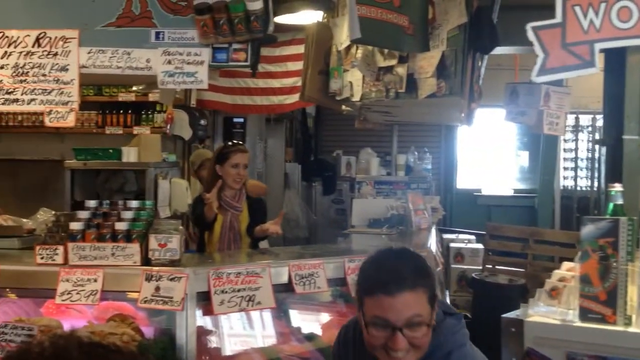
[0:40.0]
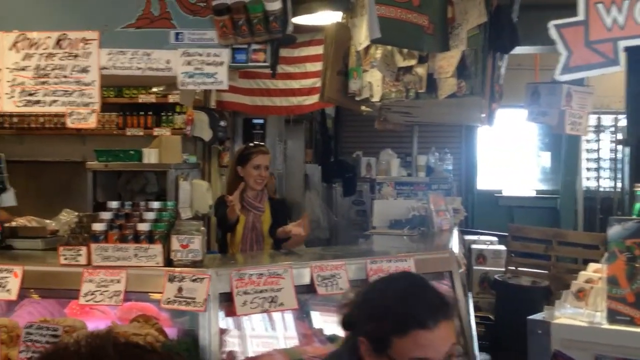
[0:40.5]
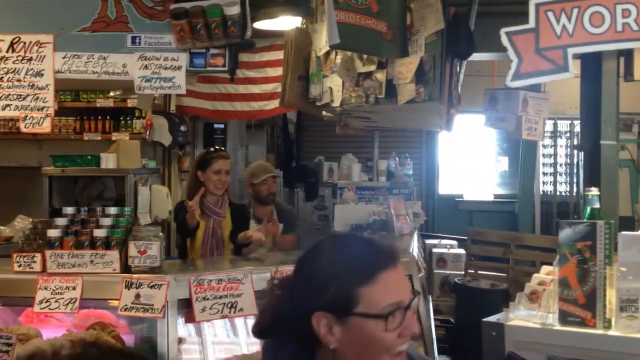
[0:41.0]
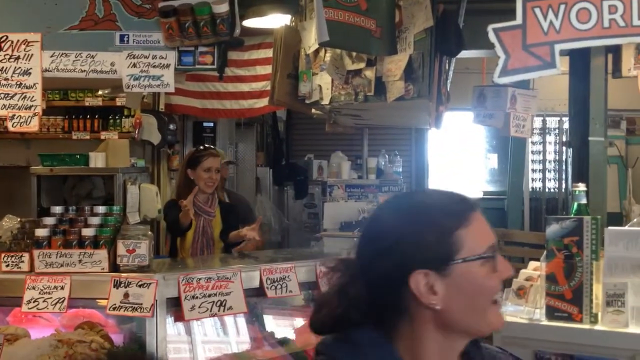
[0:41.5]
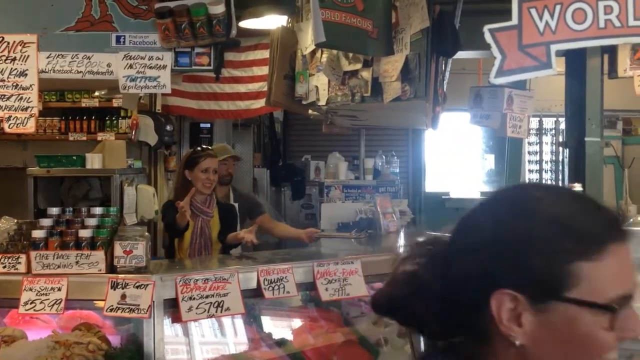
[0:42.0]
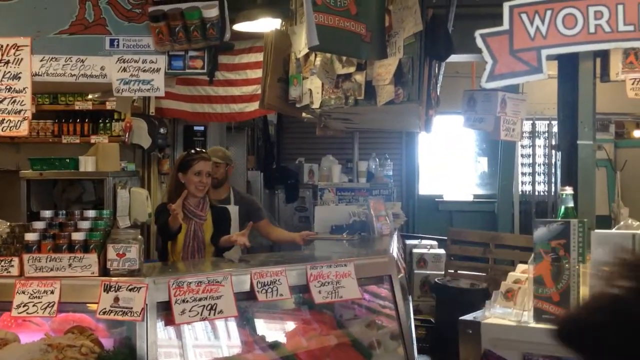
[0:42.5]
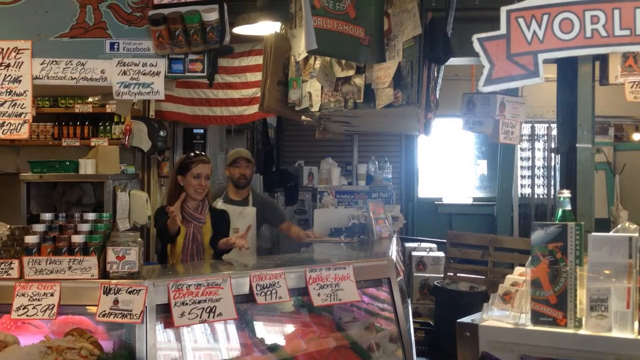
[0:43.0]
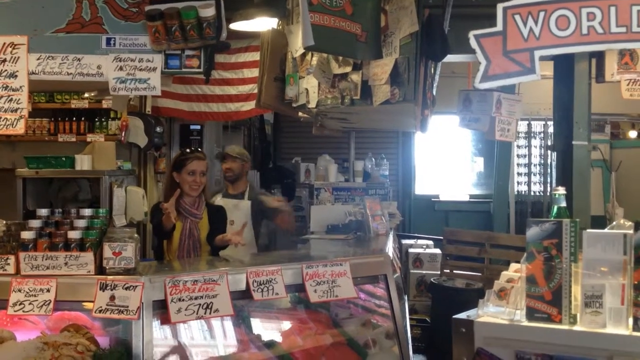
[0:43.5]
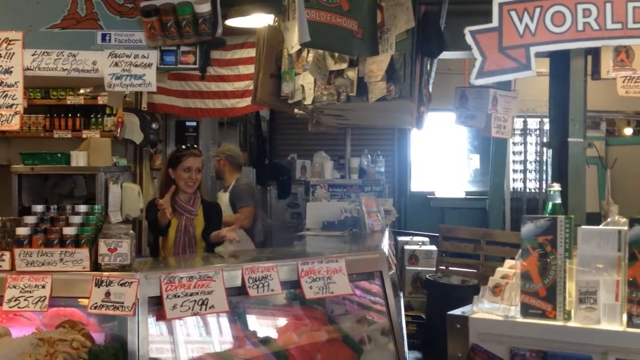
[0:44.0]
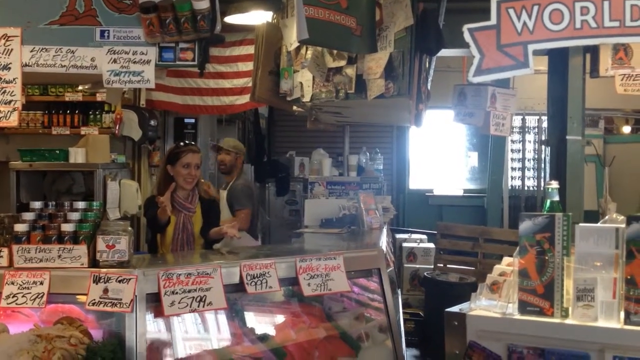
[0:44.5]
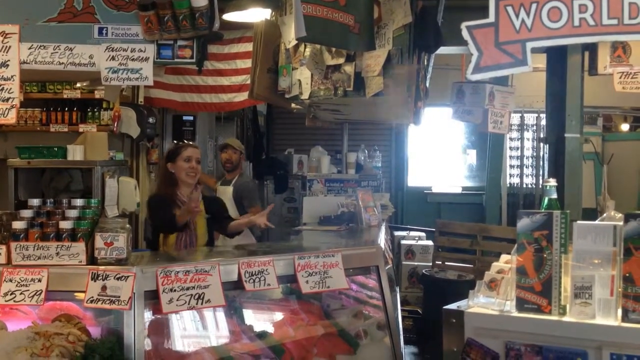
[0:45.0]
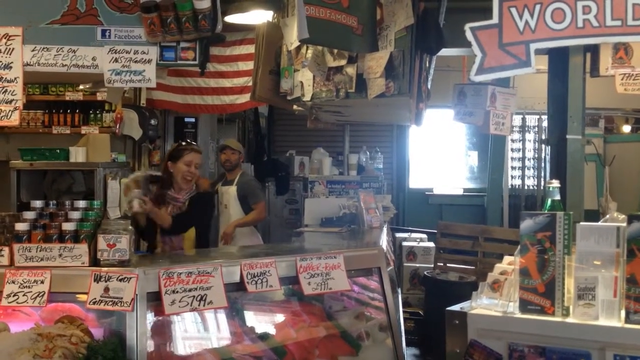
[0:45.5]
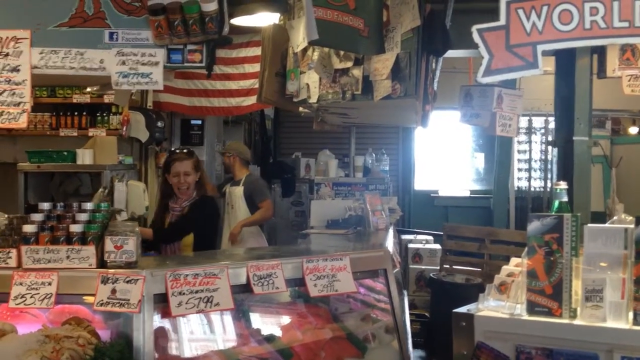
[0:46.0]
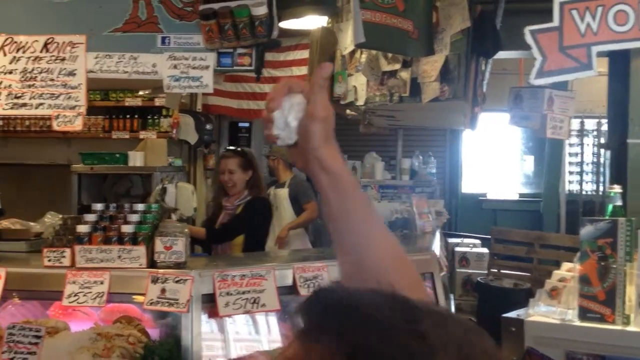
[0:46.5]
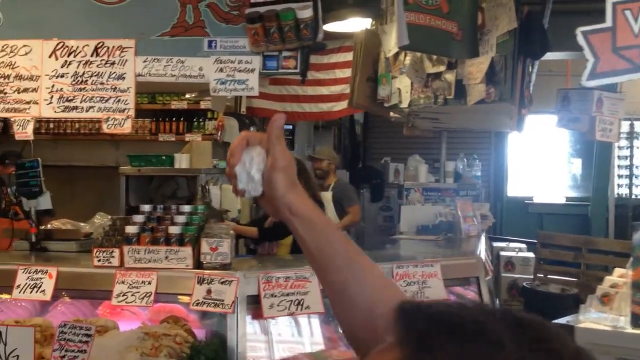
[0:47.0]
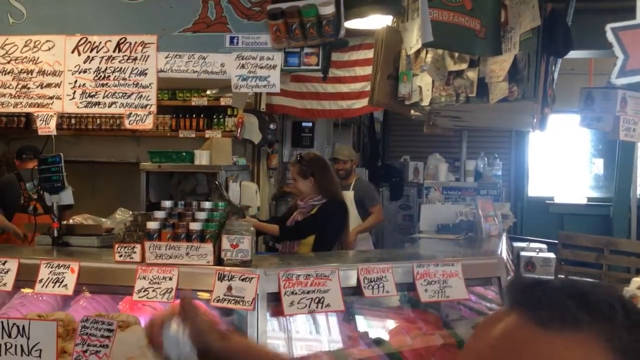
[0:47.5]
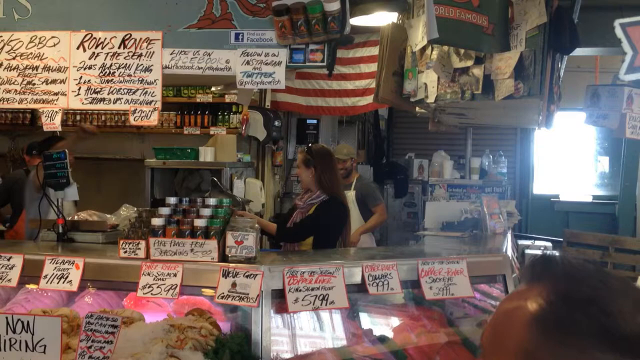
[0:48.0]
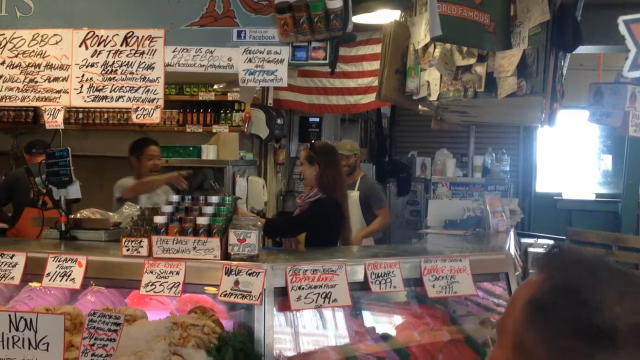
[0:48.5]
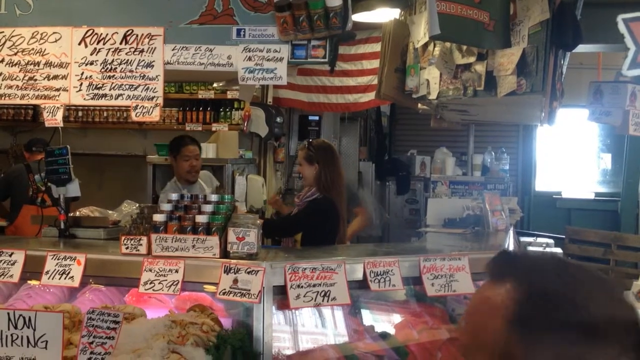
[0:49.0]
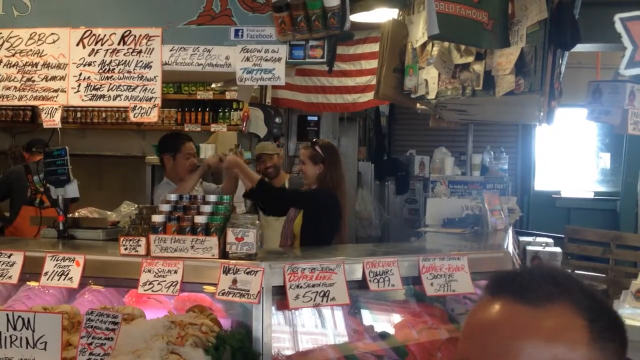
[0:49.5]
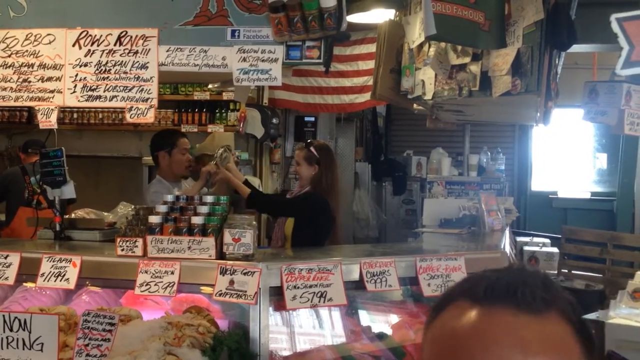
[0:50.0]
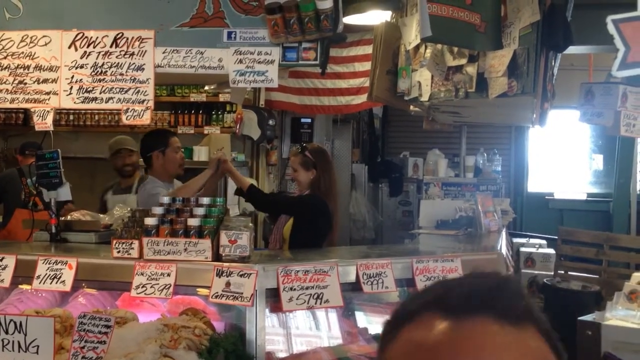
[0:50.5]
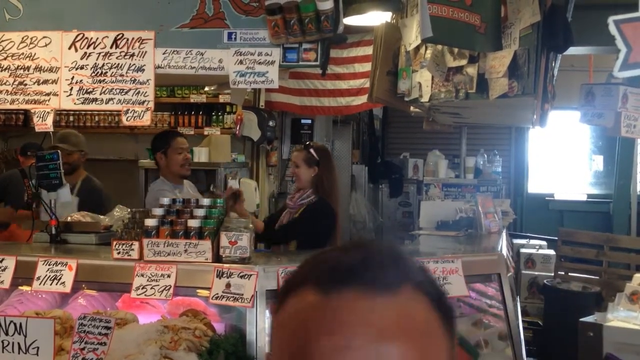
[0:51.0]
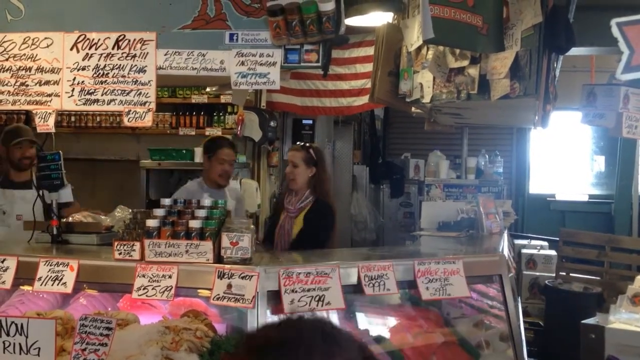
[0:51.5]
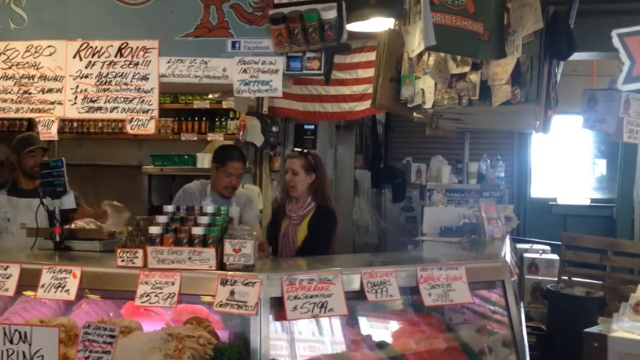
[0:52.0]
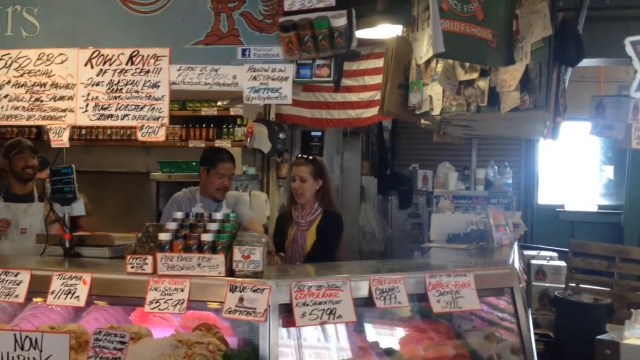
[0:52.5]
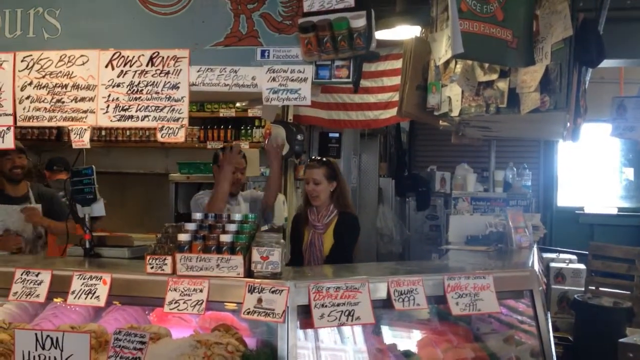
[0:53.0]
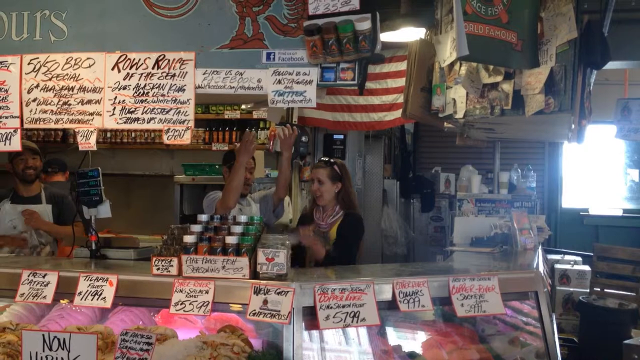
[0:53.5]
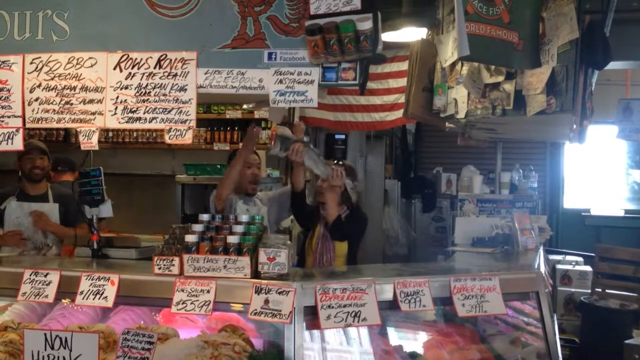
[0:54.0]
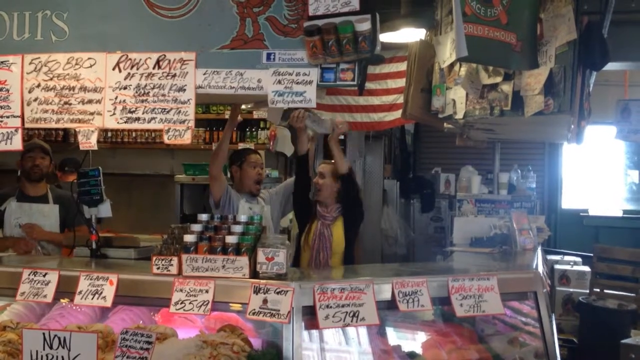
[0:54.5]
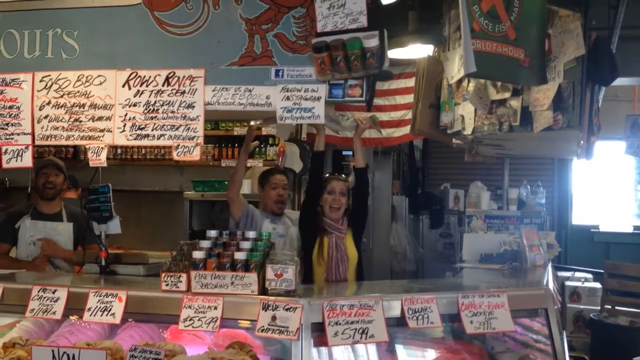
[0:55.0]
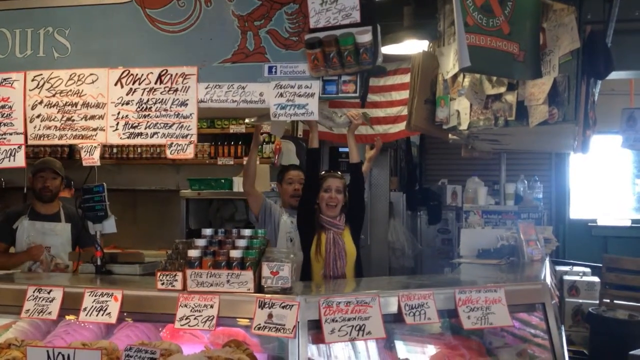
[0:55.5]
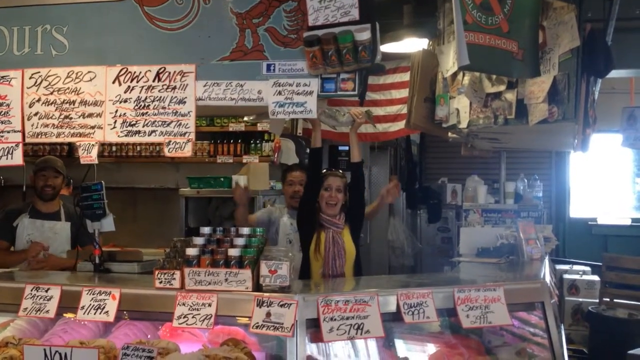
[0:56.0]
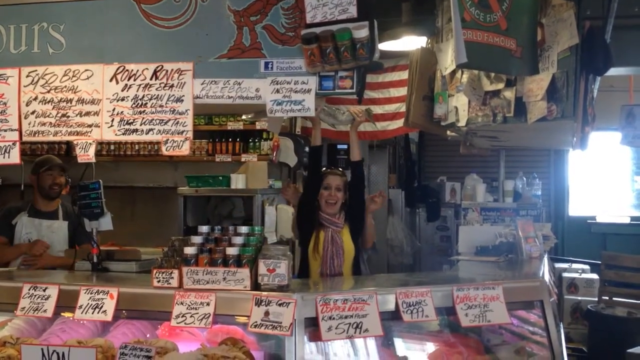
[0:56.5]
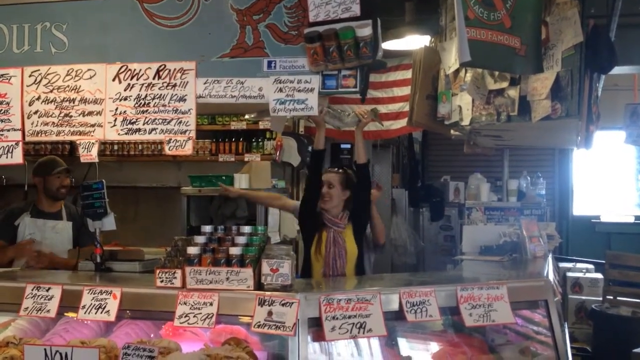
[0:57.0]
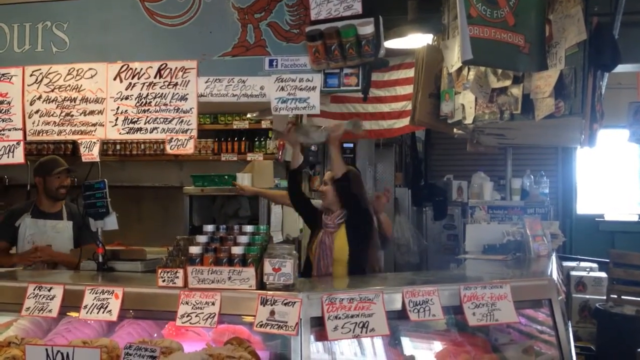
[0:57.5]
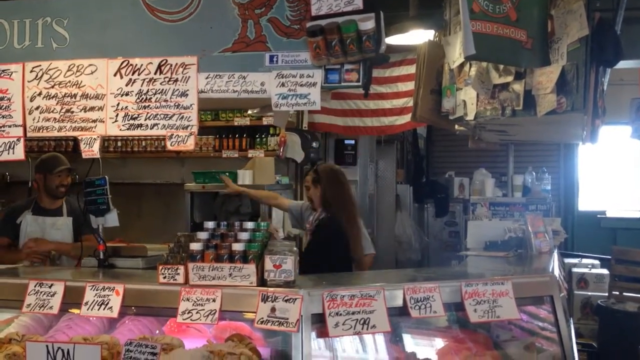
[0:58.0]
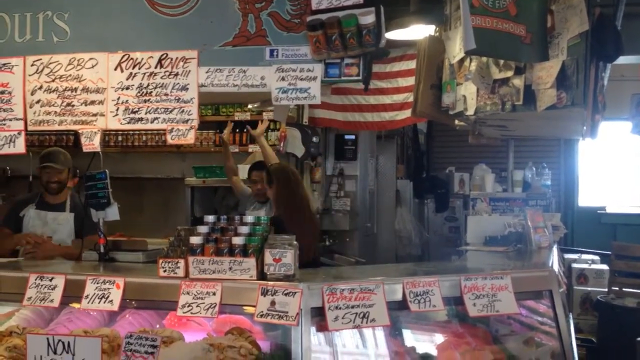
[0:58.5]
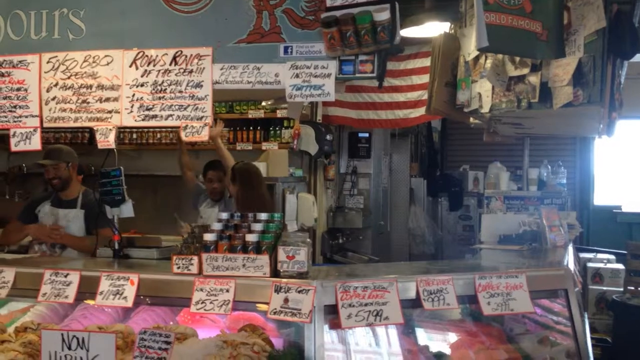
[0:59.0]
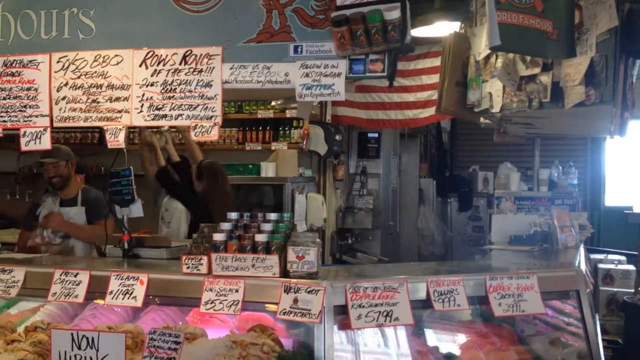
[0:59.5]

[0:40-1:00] The cashier, a woman in a yellow shirt, a black sweater and some type of red, white and blue scarf, is still holding her hands out; the man was apparently trying to teach her how to catch something. One of the cooks behind the counter comes up behind her and throws something across the shop to the man on the other side of the gift shop, who throws it back, and the cashier catches it. It is a fish of some sort, about a foot and a half long, so perhaps the man was putting his arm into her hand to show her how to grip and catch a fish. The little restaurant looks like it is on a pier.